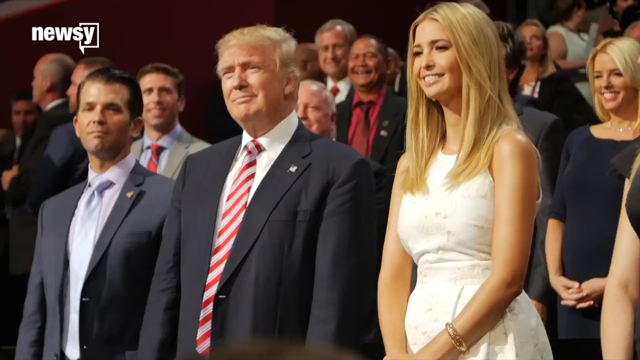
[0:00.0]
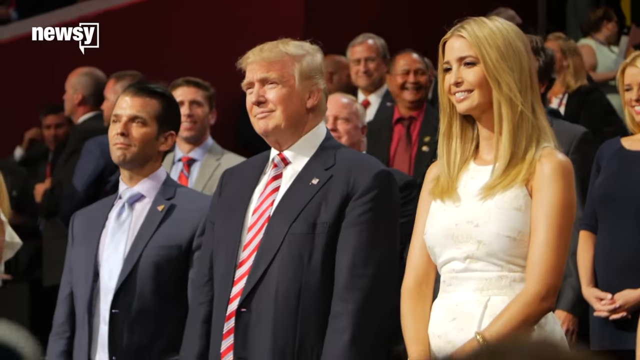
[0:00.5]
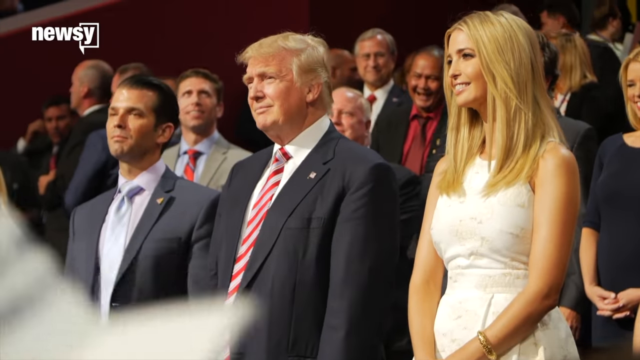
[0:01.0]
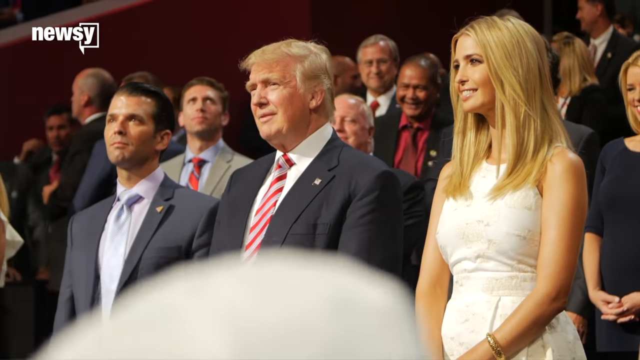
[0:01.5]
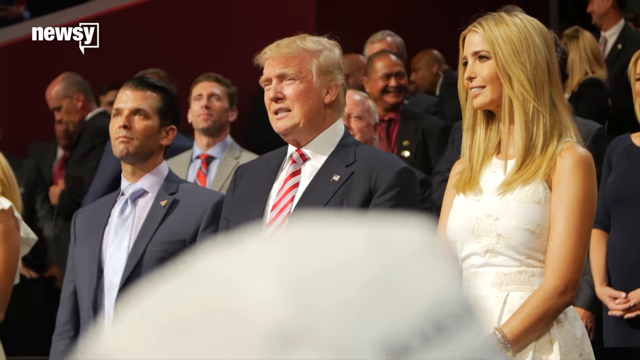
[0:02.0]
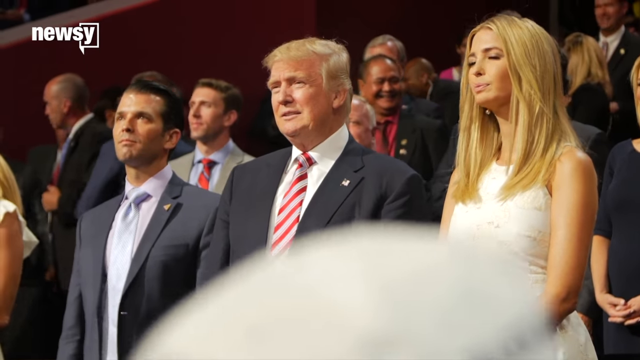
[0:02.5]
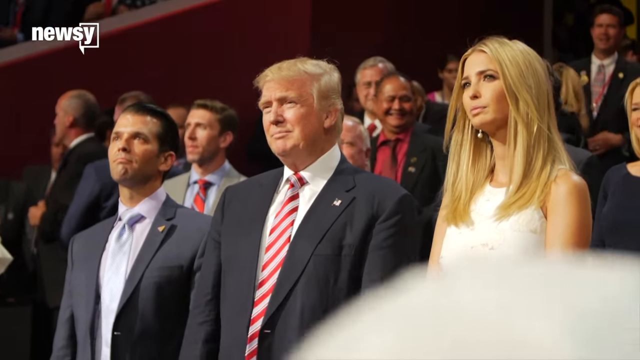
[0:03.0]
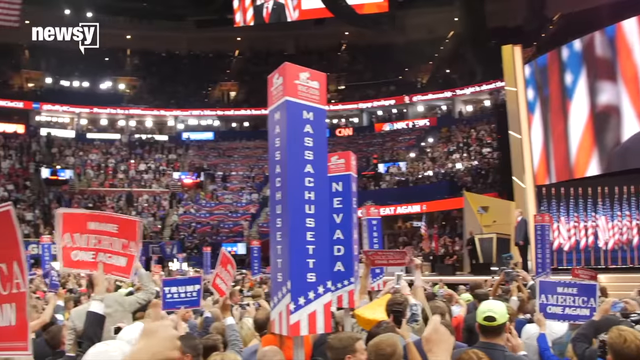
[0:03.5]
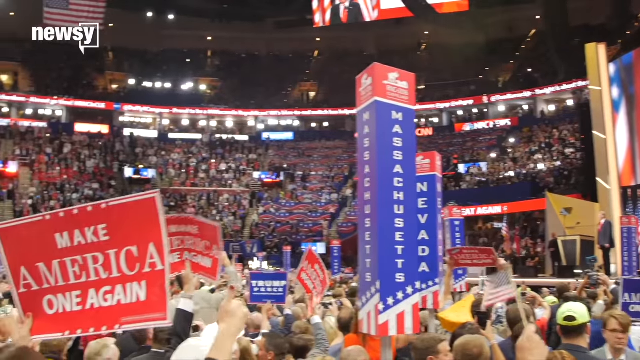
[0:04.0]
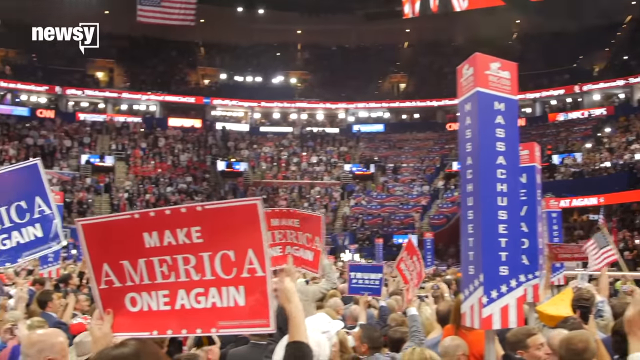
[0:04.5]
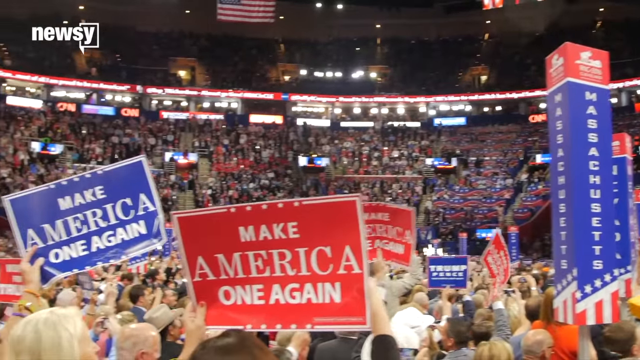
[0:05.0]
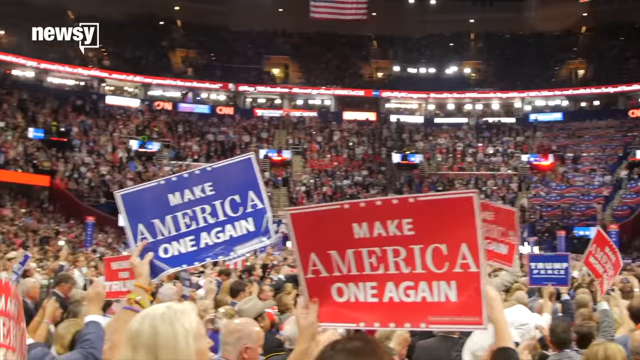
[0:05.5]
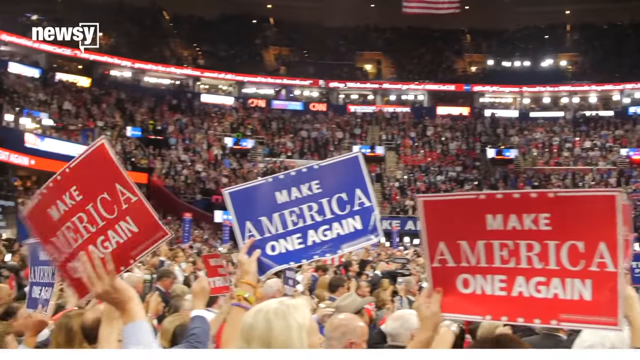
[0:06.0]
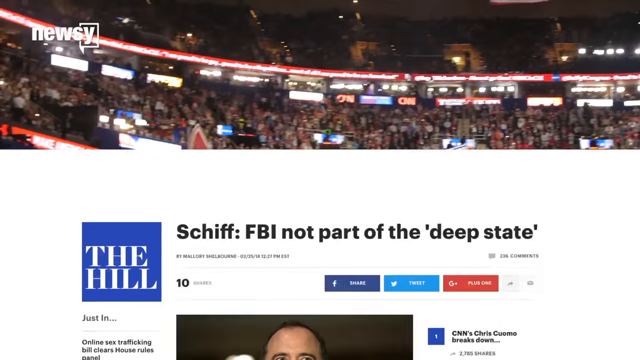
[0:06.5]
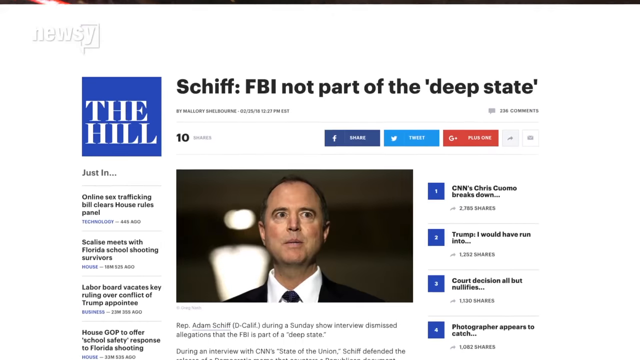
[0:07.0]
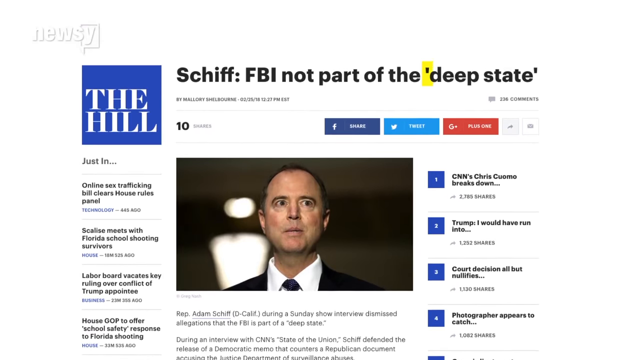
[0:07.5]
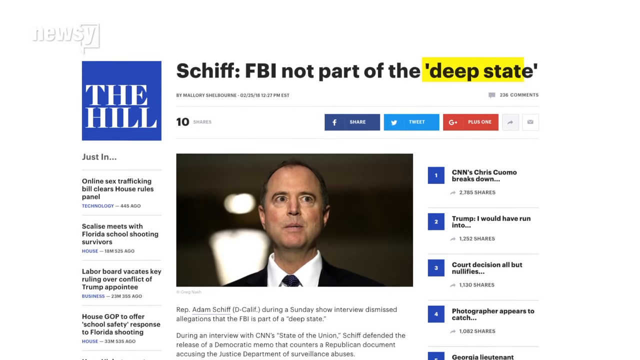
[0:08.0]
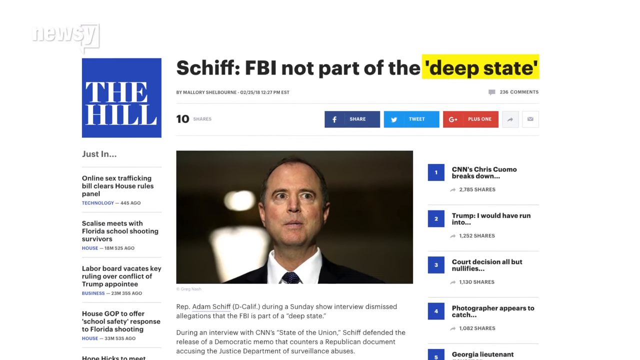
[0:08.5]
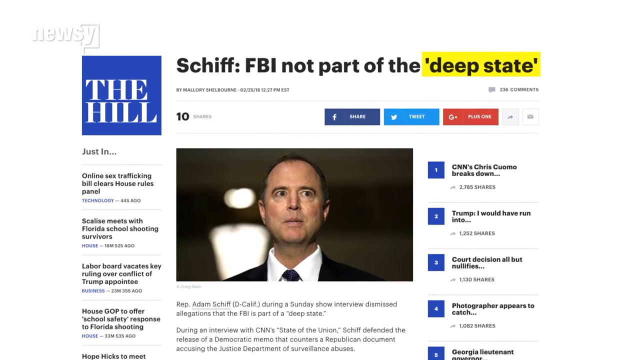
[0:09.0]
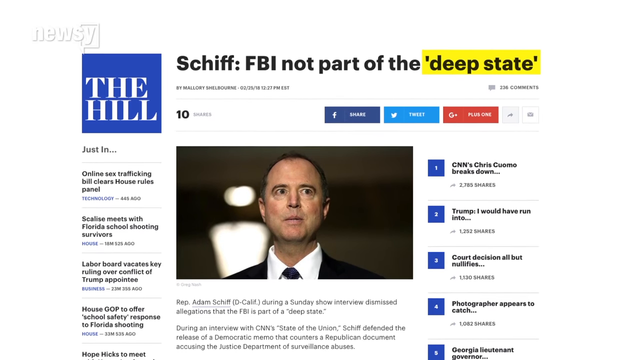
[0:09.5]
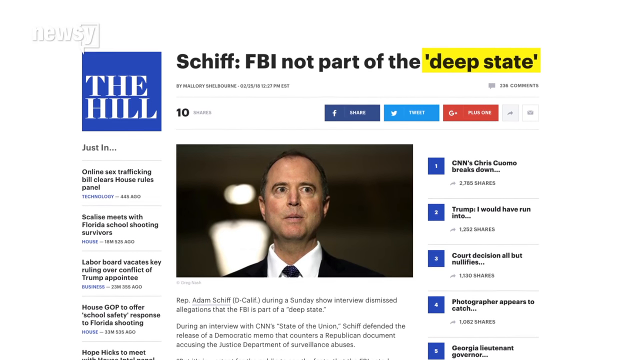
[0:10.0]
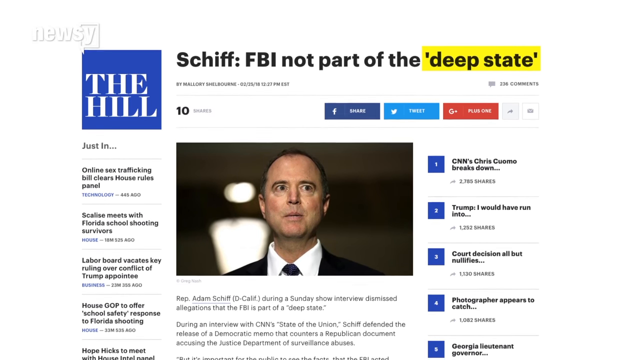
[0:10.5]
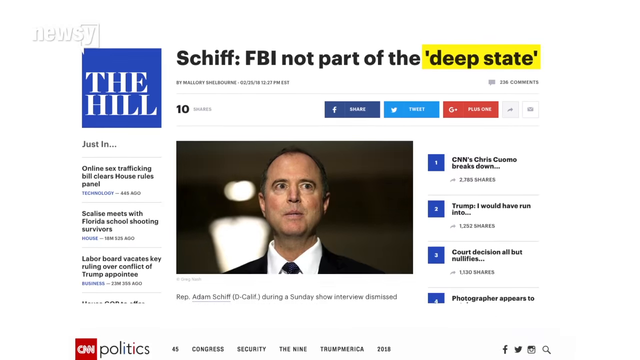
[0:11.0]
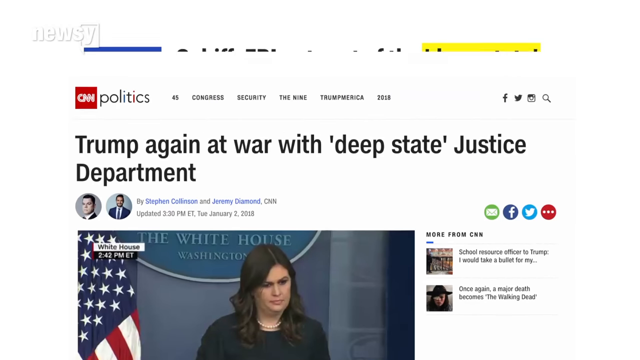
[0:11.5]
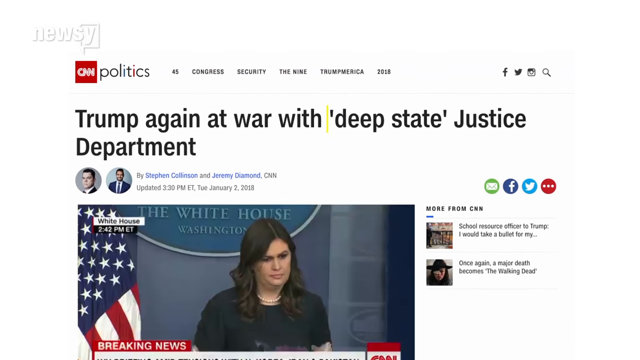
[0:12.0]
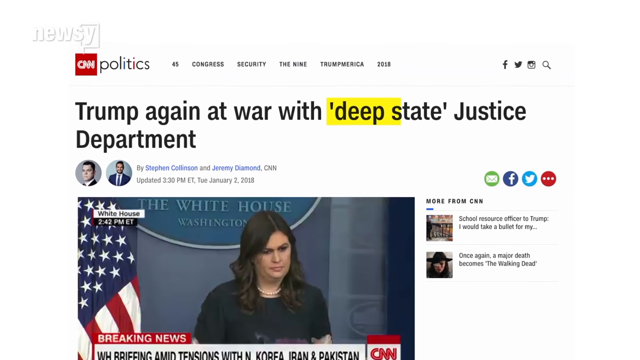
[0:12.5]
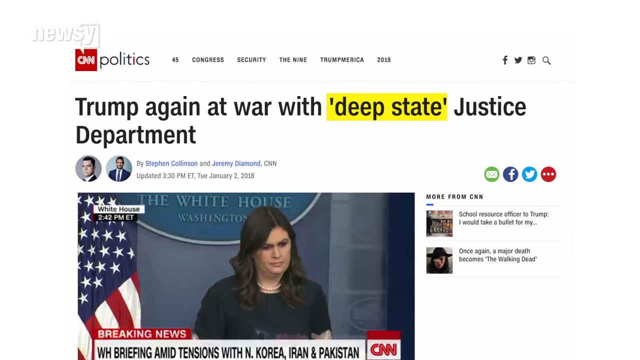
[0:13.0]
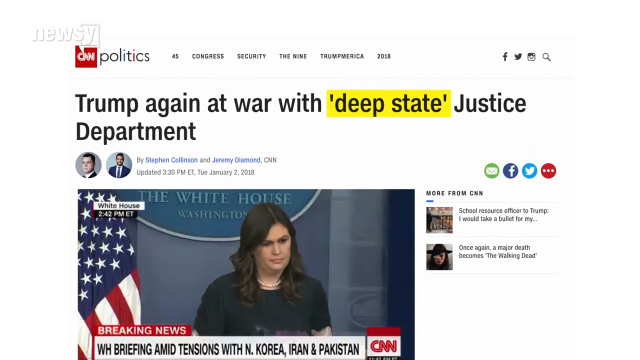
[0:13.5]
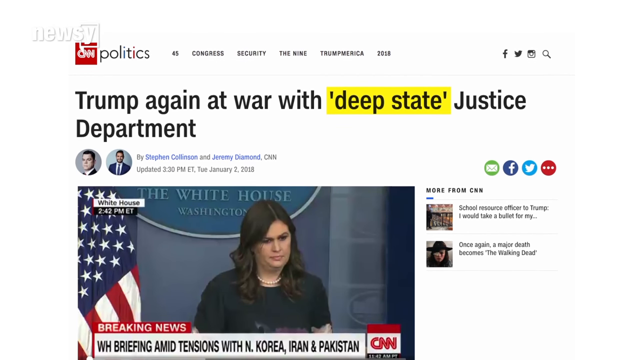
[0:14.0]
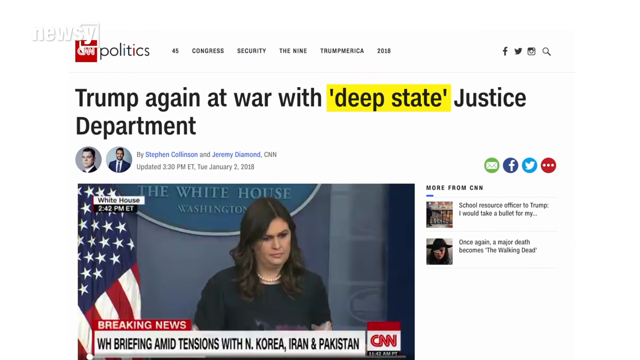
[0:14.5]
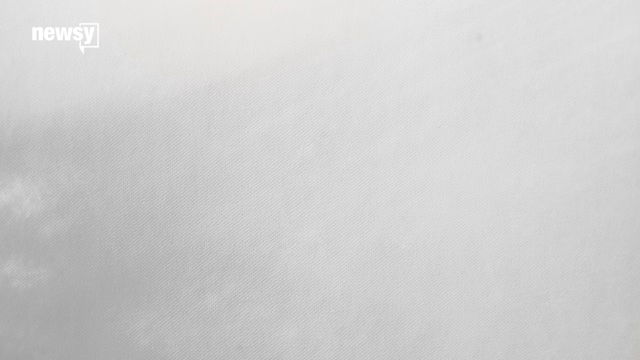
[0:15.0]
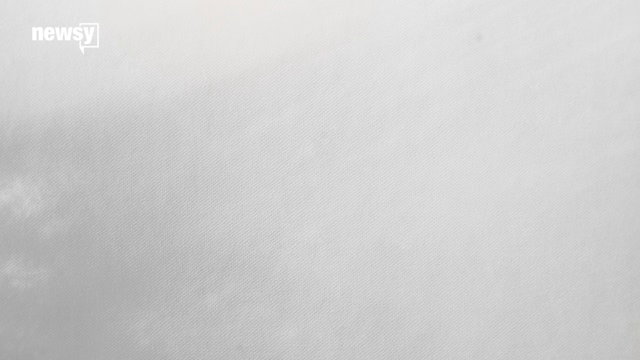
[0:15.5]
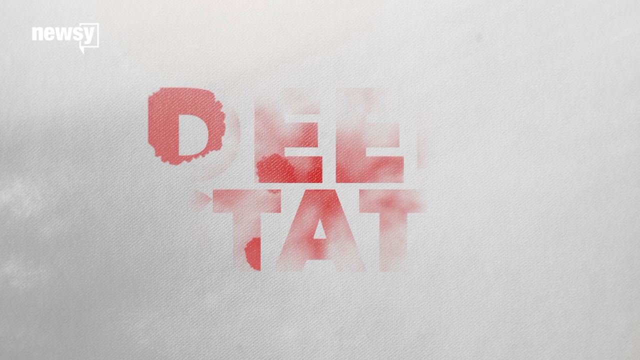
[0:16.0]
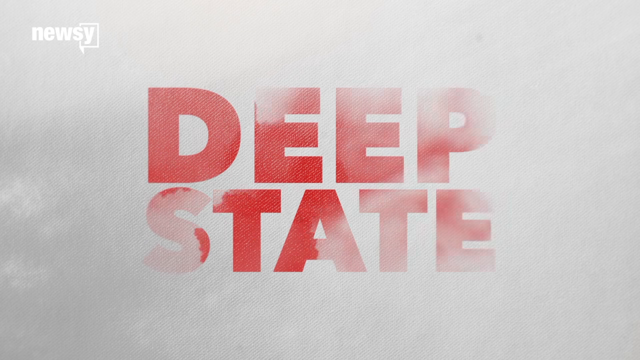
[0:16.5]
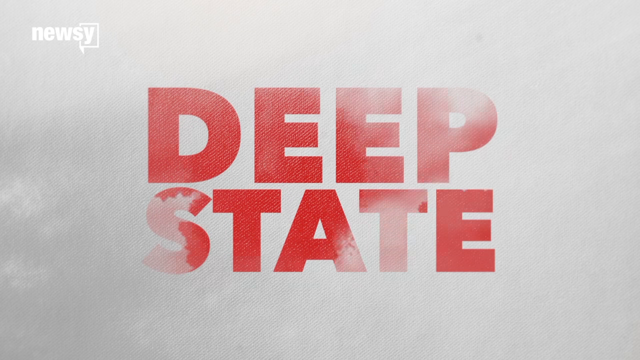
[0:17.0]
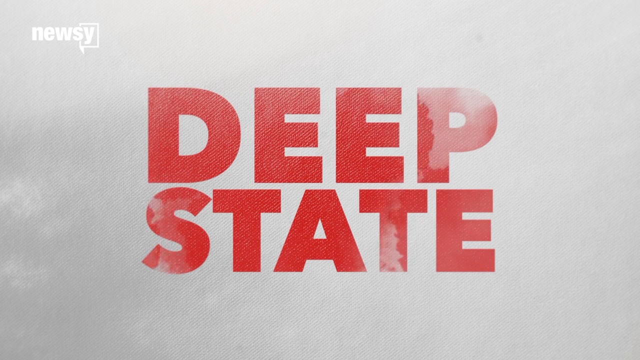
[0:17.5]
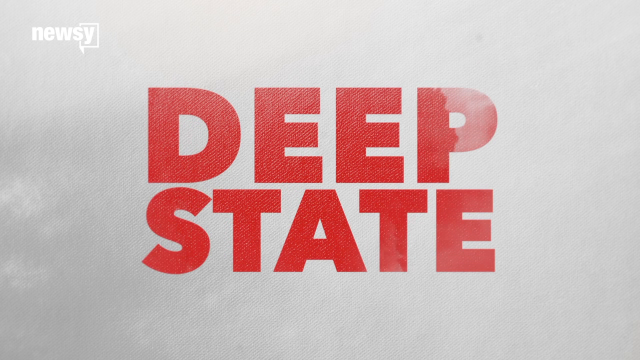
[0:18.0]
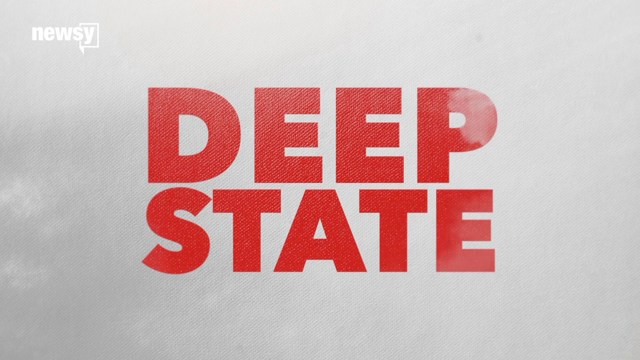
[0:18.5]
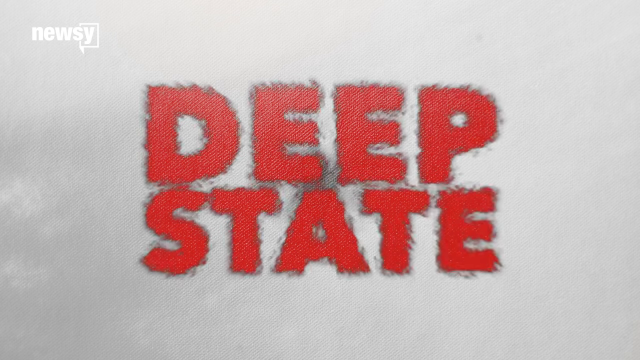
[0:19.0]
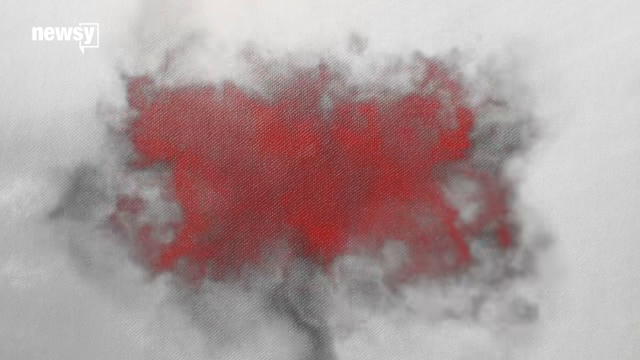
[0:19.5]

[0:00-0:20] Donald Trump stands next to a woman who is apparently one of his daughters; his daughter is on his right, and another man is on his left. Lots of people are in the background behind them. Trump and the person next to him wear suits and ties, and Trump's has some red in it. The text "make America great again" appears, so this is possibly part of his campaign tour. A news page pops up reading "Shift: FBI not part of the deep state" with a picture of a man. The same news then shows a clip titled "Trump again at war with deep state Justice Department," in which a woman is in front of a background that looks like the White House, with a flag up, and she is in front of a podium talking. Words then come up in all red capital letters, "deep" at the top and "state" at the bottom, and they explode into a red gas.